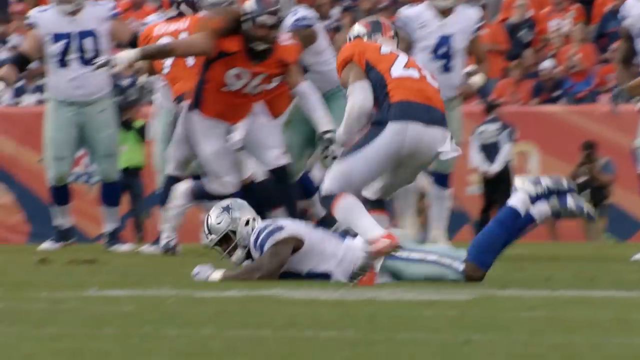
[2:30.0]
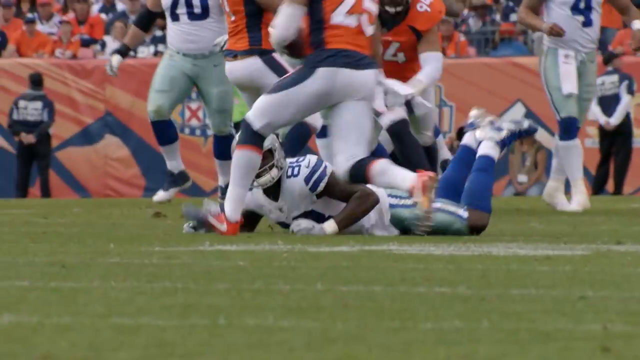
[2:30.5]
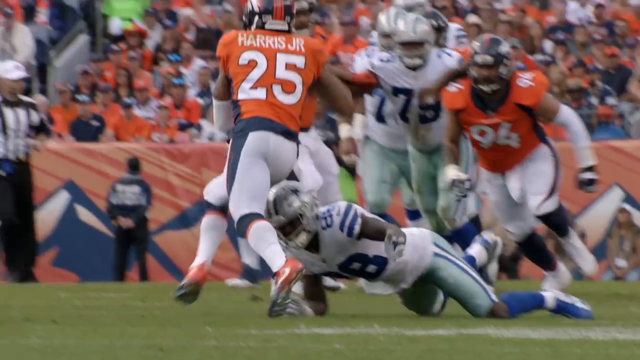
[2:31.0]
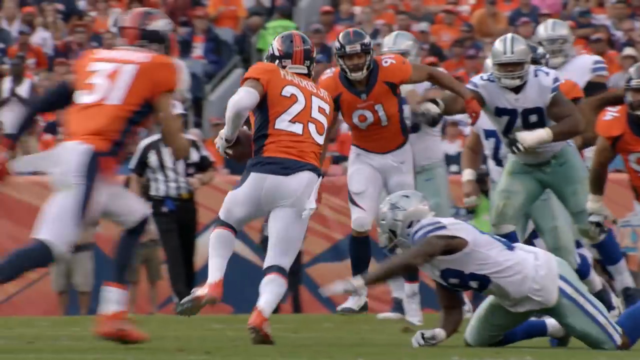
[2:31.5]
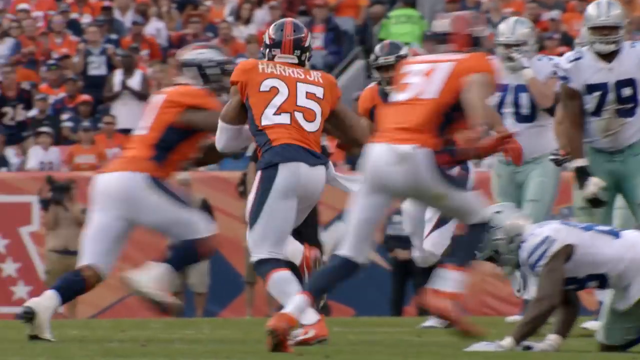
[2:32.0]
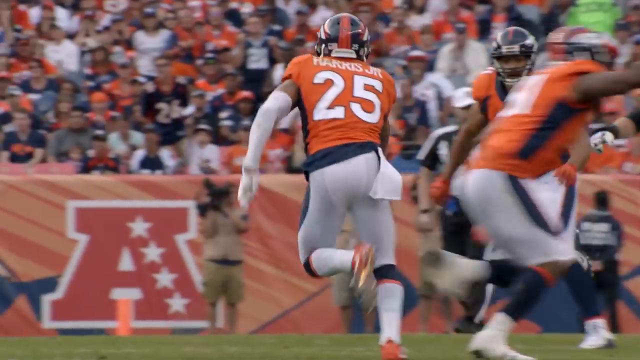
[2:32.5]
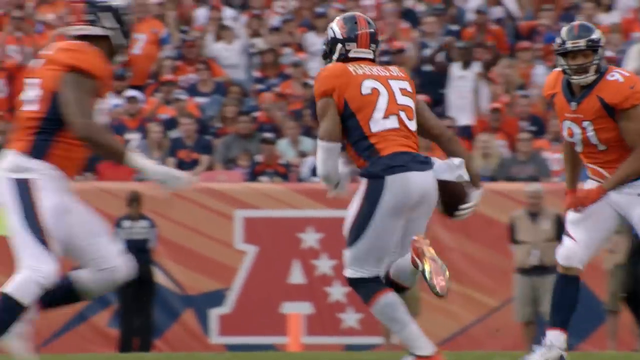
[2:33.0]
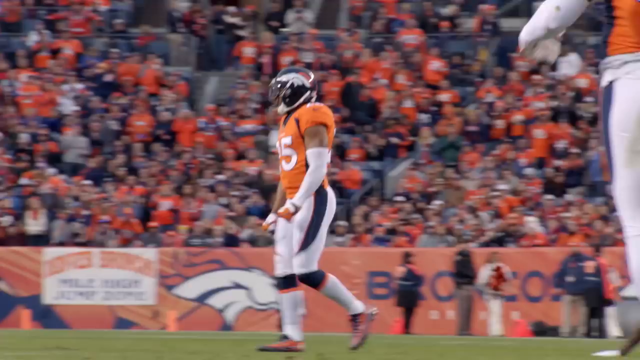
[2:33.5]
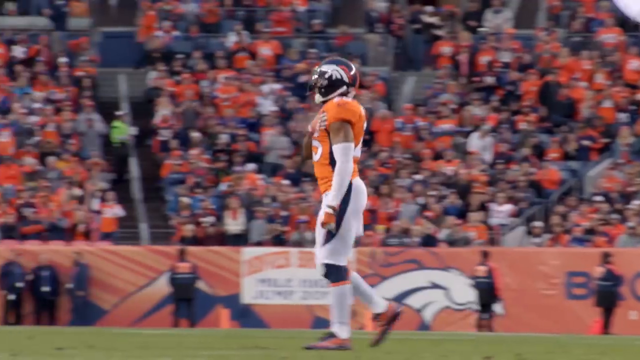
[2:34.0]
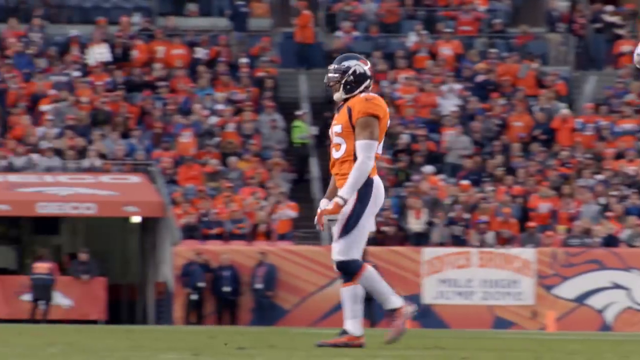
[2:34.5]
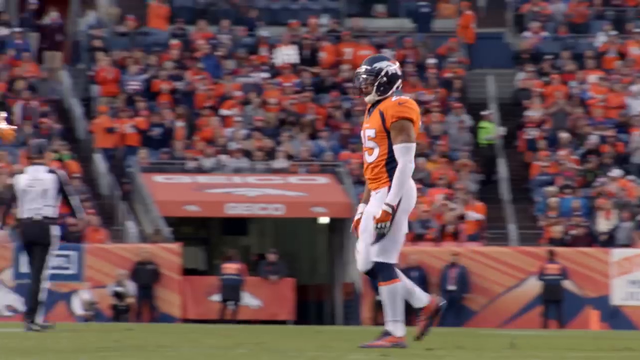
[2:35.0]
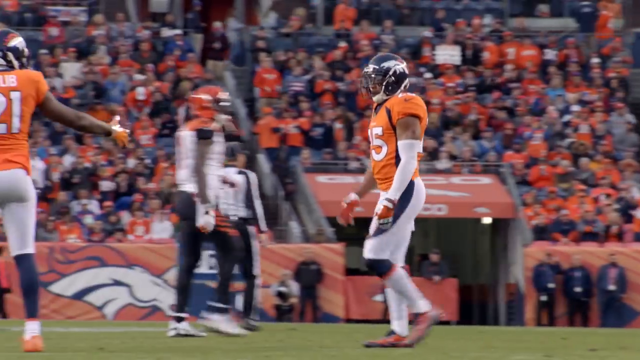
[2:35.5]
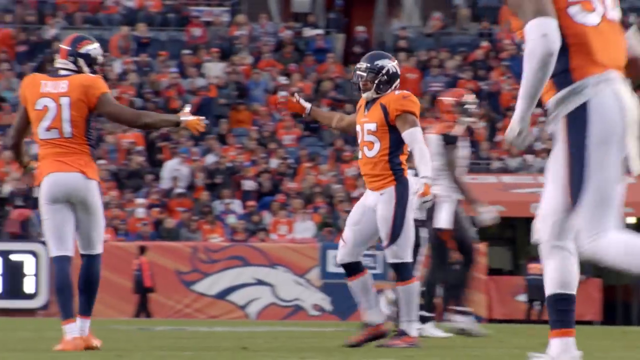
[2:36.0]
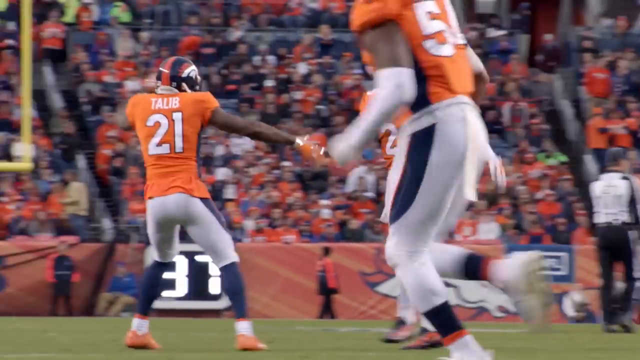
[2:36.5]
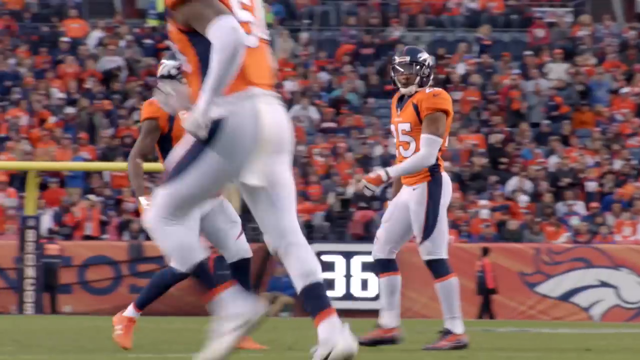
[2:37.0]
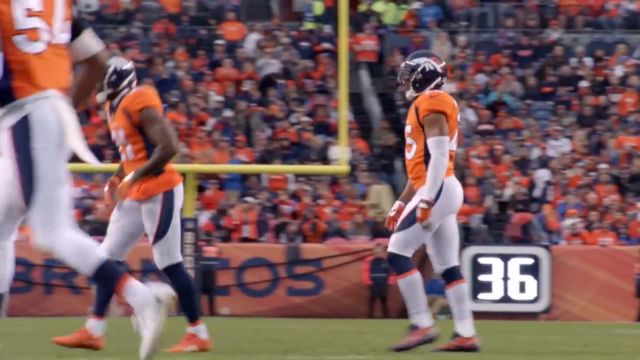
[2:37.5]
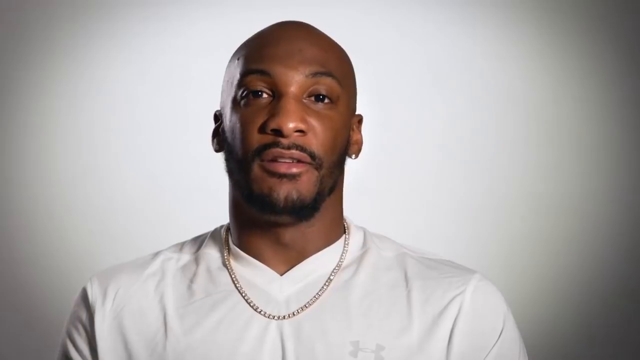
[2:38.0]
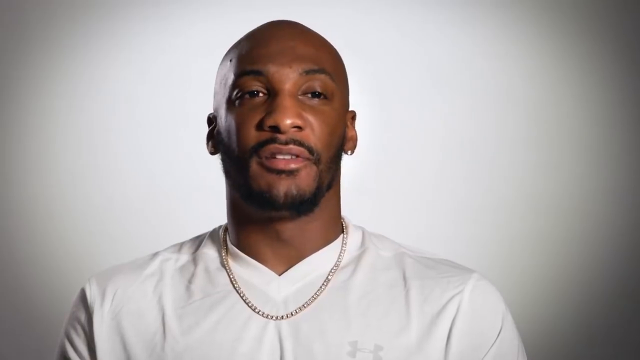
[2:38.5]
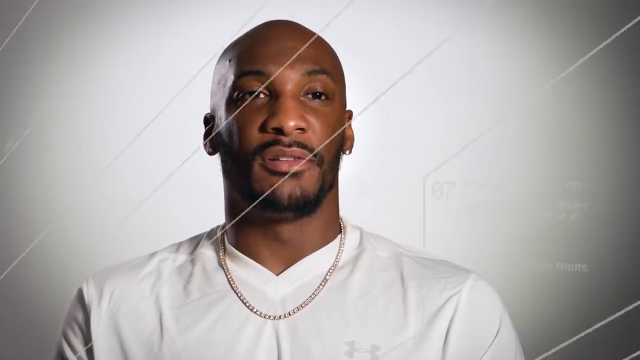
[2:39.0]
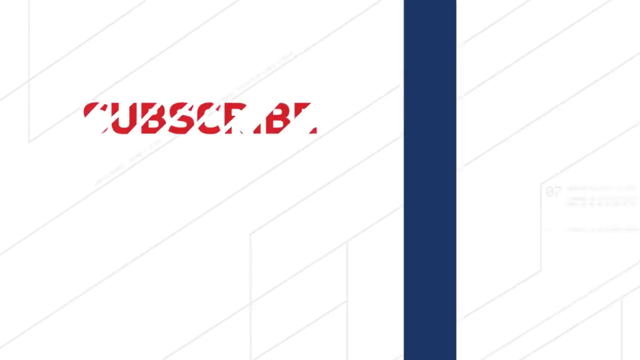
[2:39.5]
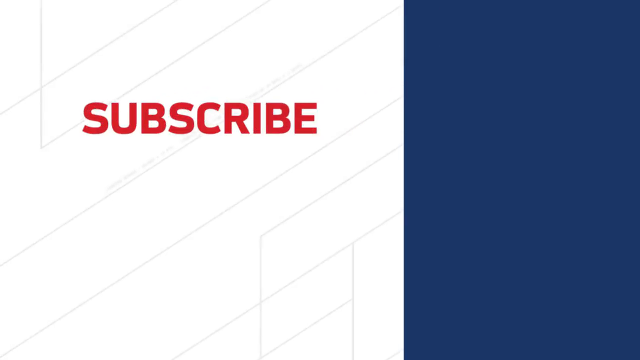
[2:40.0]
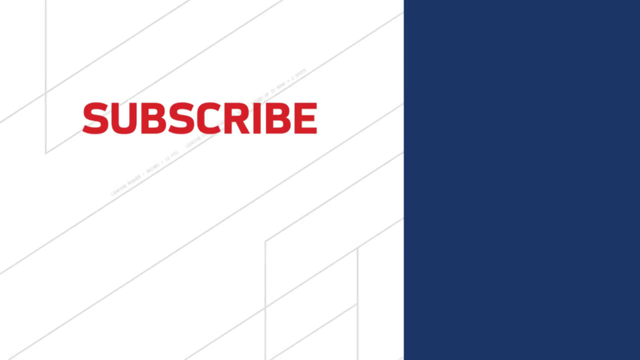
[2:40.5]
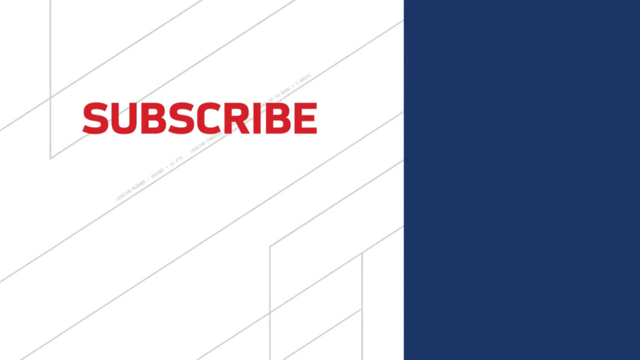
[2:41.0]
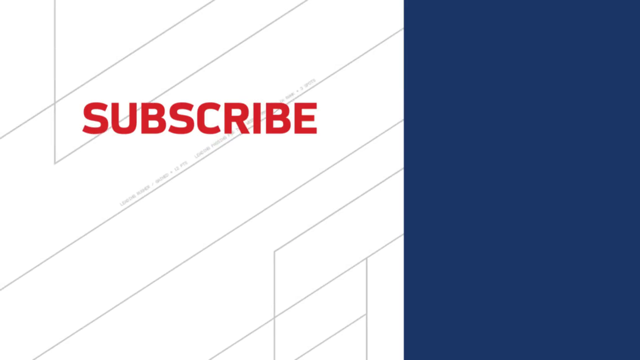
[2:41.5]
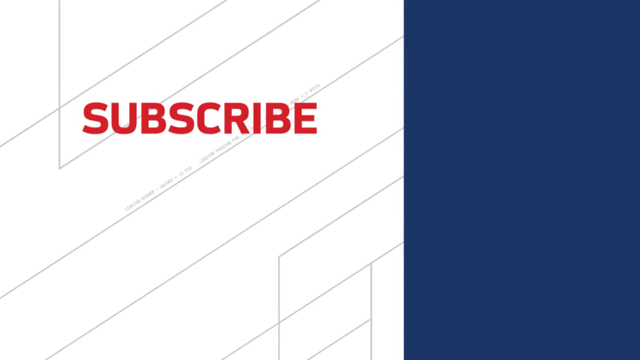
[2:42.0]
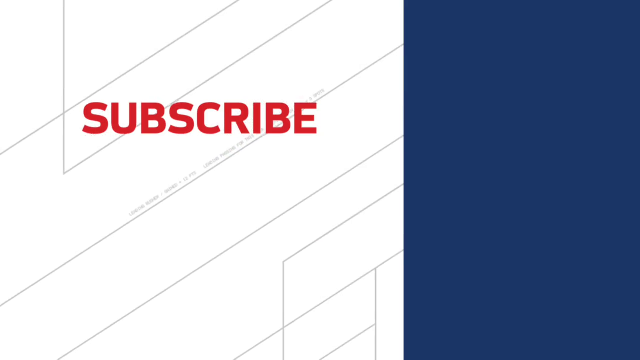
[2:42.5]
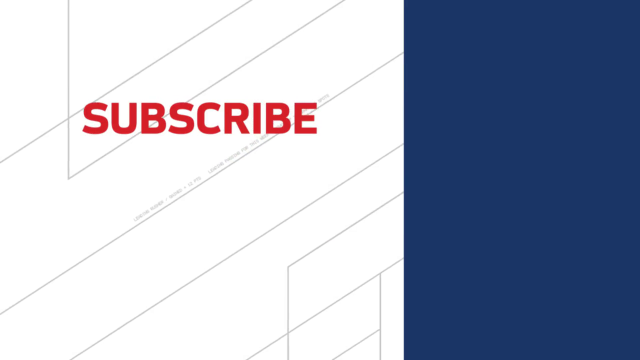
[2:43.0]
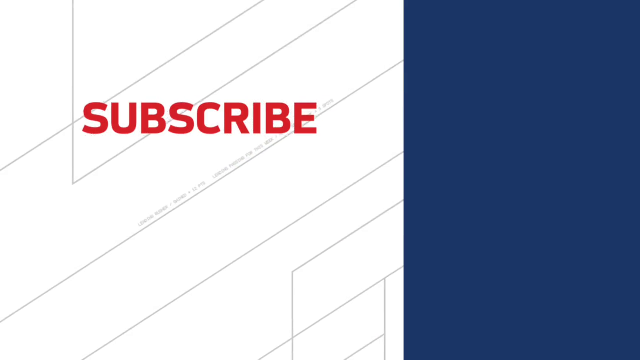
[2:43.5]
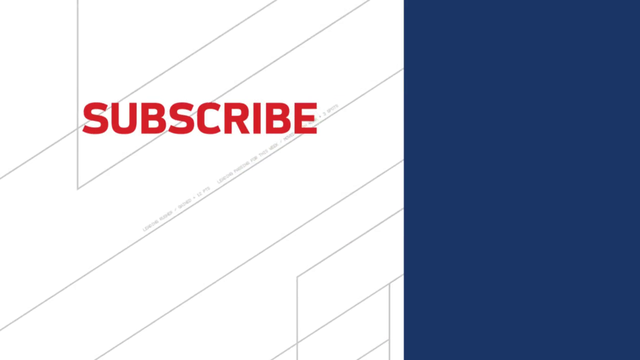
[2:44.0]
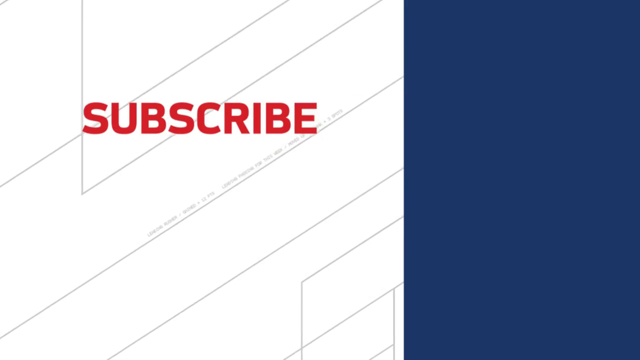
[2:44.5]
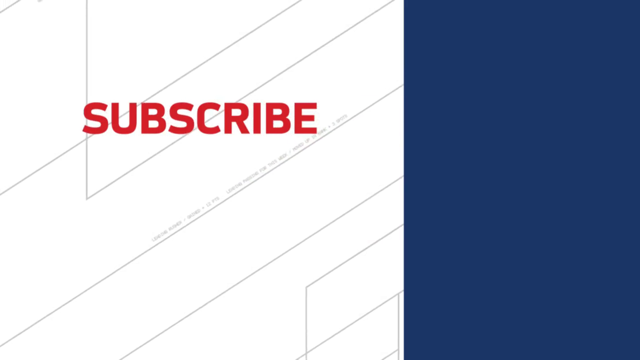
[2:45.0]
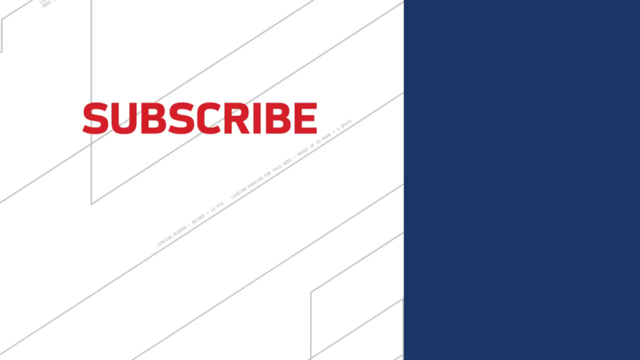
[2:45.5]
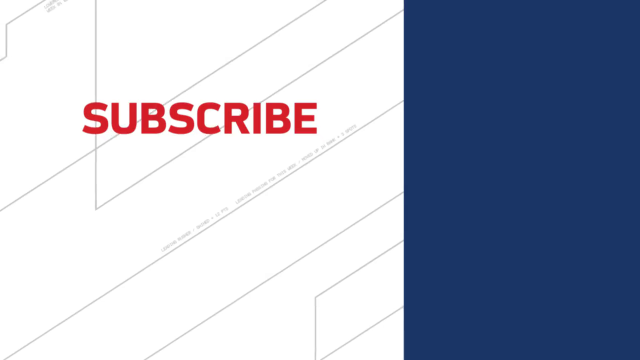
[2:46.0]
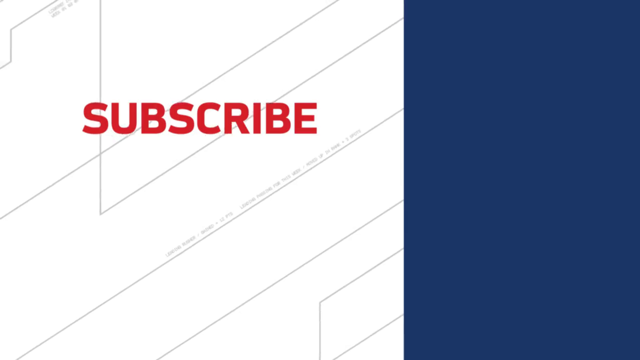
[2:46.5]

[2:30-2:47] In the Denver Broncos game against the Cowboys, Harris Jr. defends against a Cowboys player. The Dallas receiver gets his hands on the ball as he dives, but it goes through his hands into Chris Harris Jr.'s hands in what appears to be an interception. The video quickly cuts to the celebration: he slaps his chest with one hand, daps up a teammate wearing number 21 with the last name Talib, and struts off the field. It then cuts to a man, apparently Aqib, talking to the camera. At the very end, the screen shows "subscribe", the NFL logo and the Denver Broncos logo.